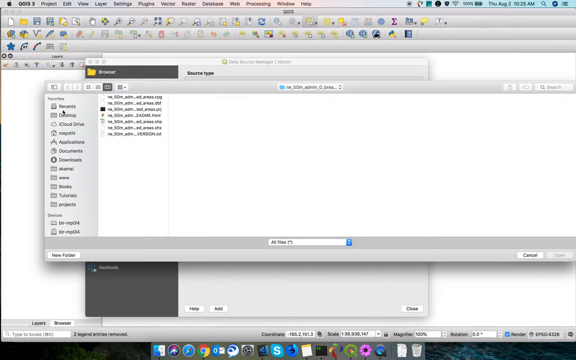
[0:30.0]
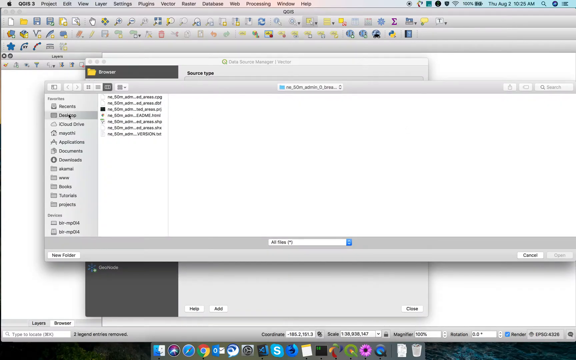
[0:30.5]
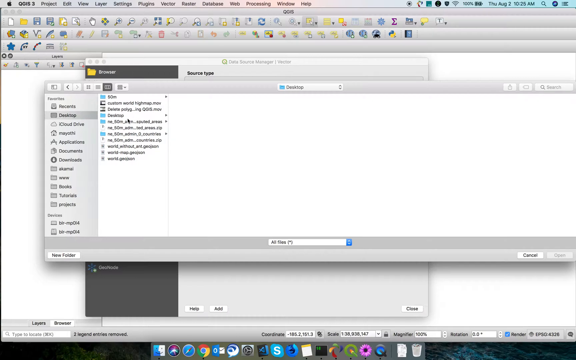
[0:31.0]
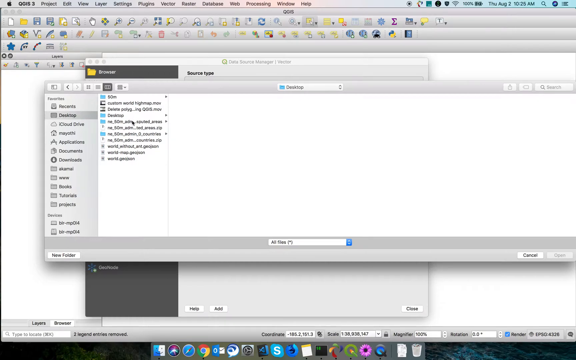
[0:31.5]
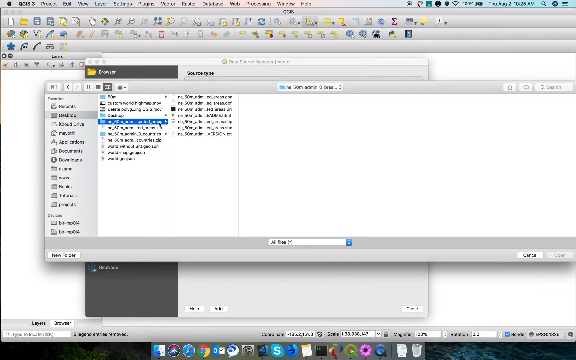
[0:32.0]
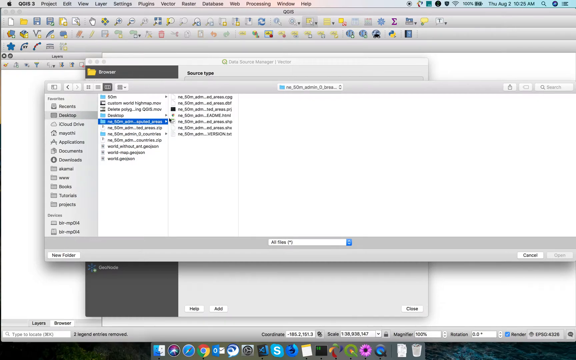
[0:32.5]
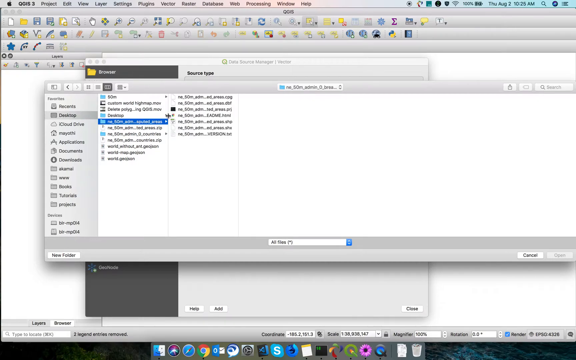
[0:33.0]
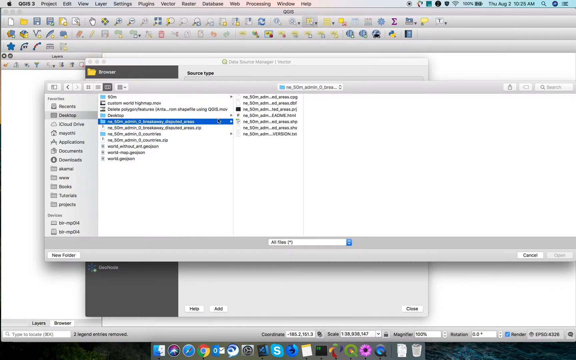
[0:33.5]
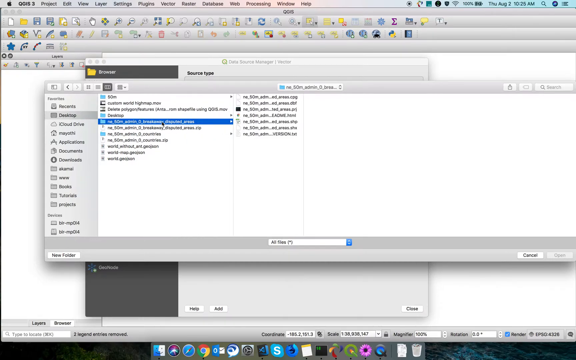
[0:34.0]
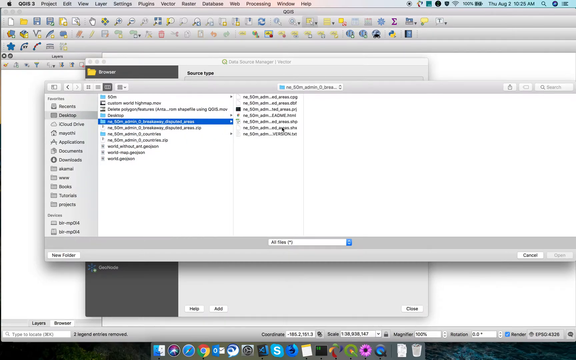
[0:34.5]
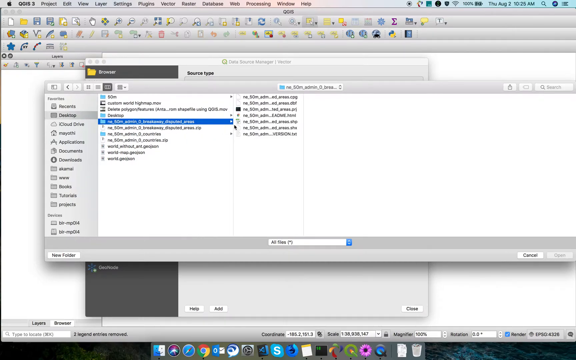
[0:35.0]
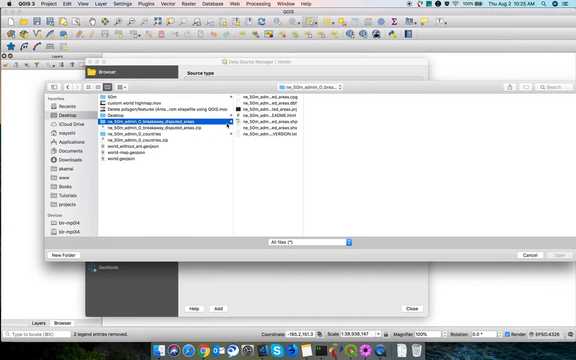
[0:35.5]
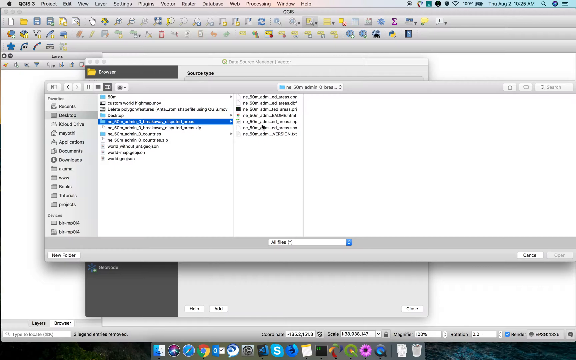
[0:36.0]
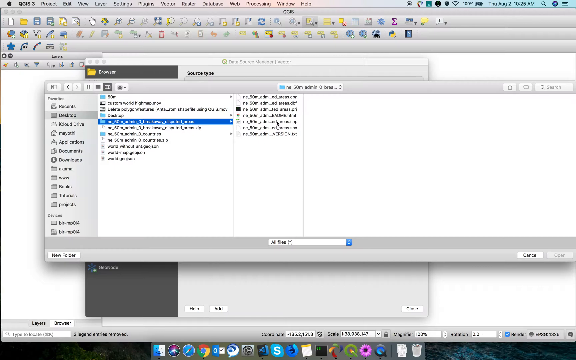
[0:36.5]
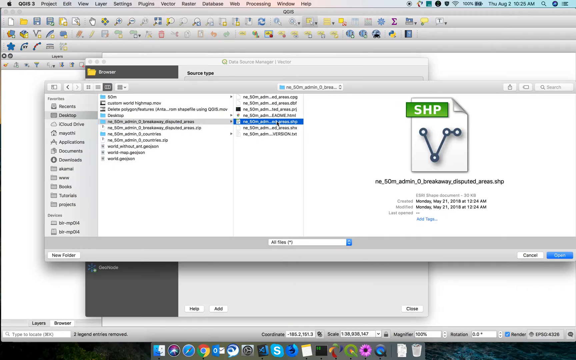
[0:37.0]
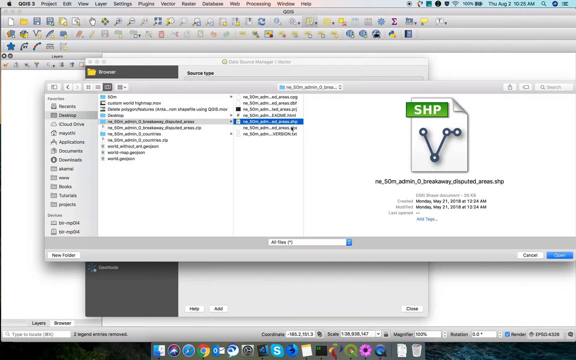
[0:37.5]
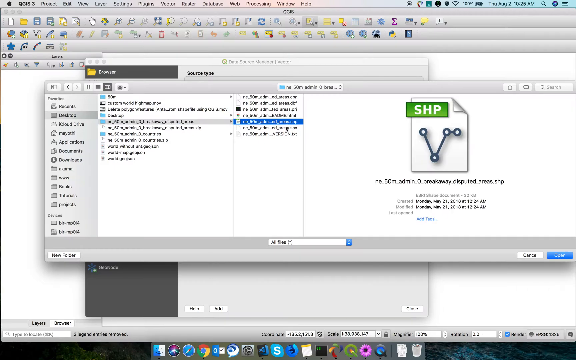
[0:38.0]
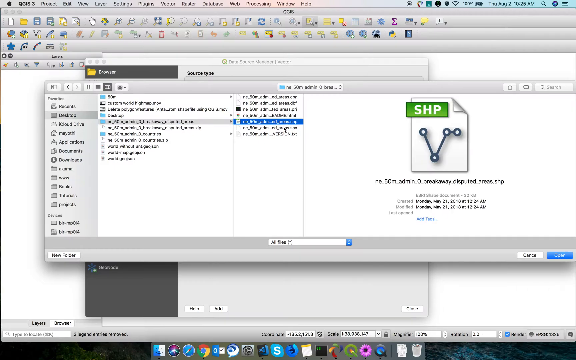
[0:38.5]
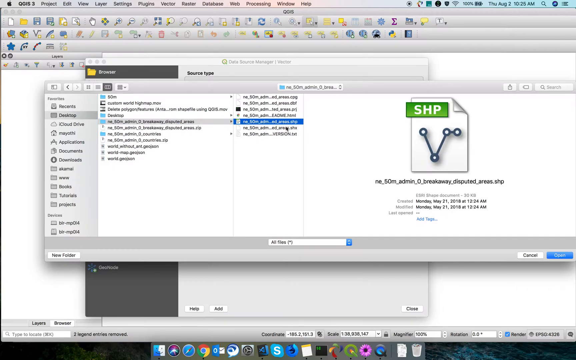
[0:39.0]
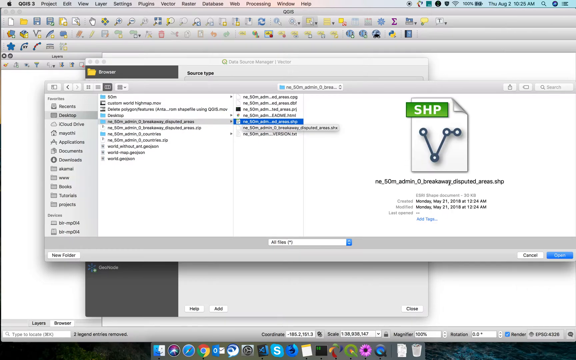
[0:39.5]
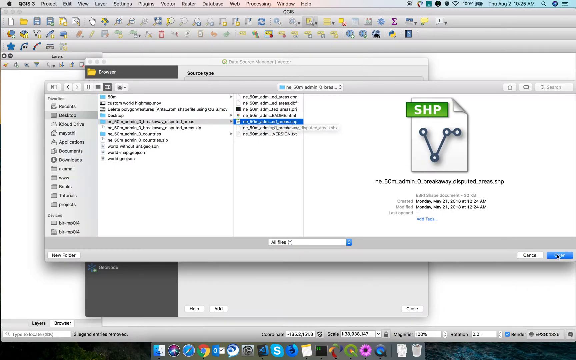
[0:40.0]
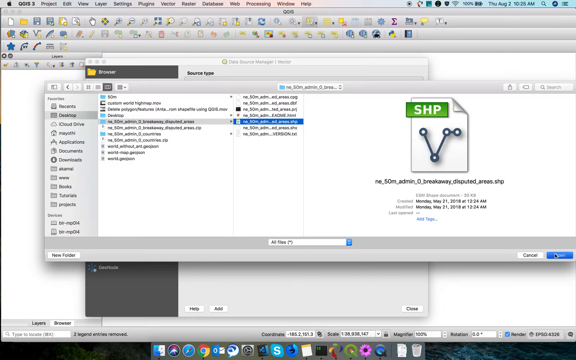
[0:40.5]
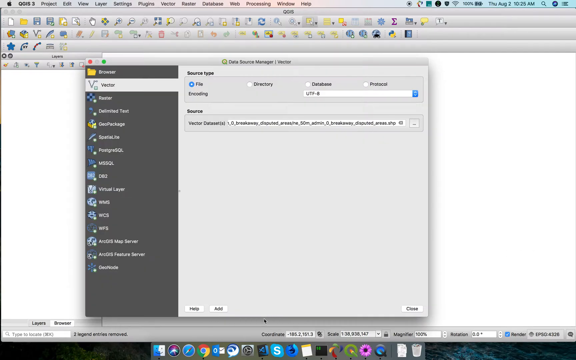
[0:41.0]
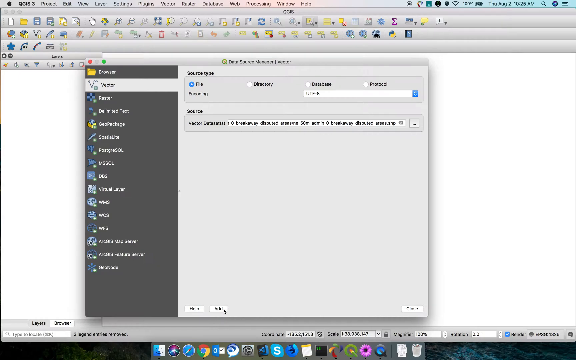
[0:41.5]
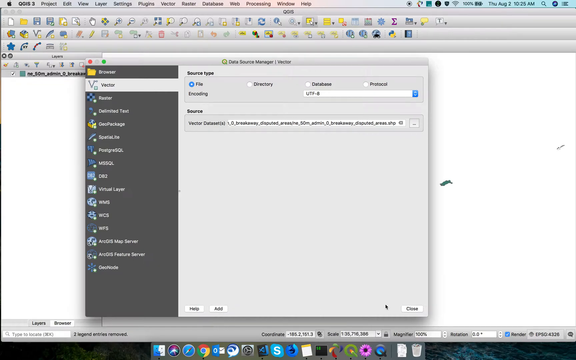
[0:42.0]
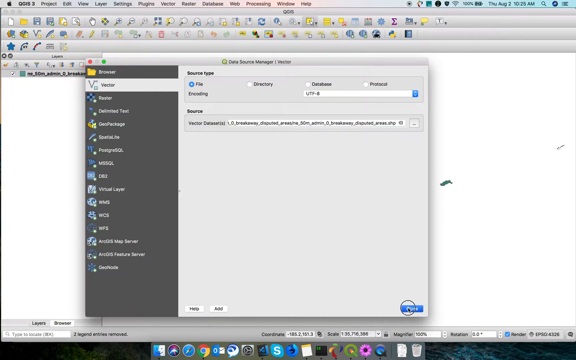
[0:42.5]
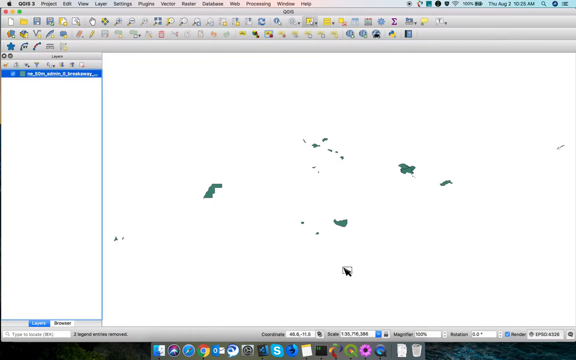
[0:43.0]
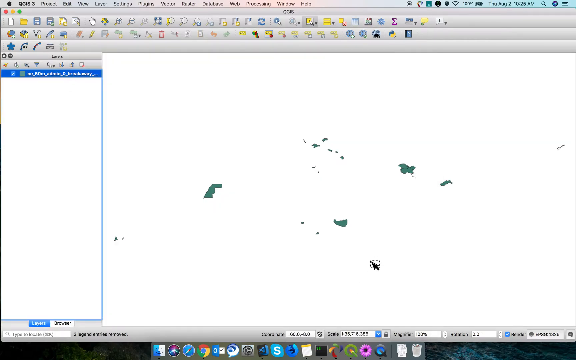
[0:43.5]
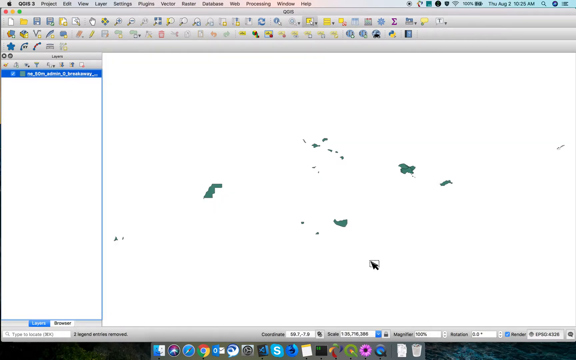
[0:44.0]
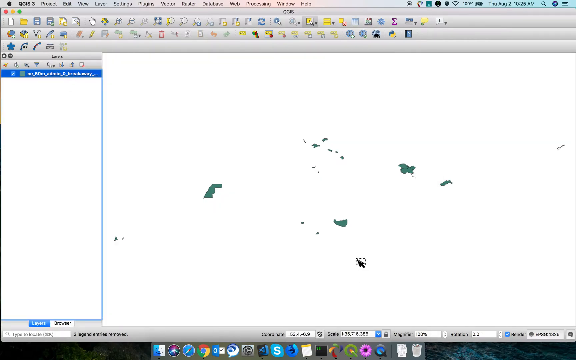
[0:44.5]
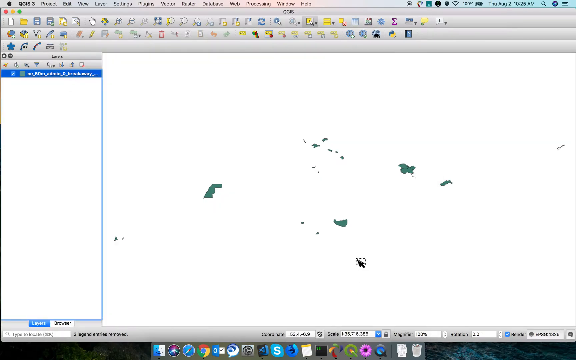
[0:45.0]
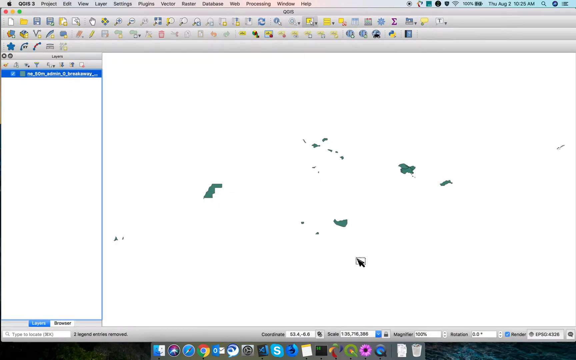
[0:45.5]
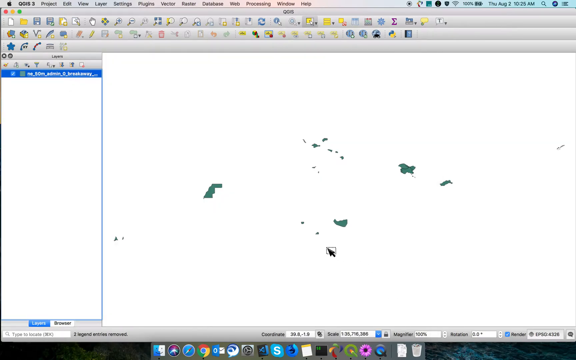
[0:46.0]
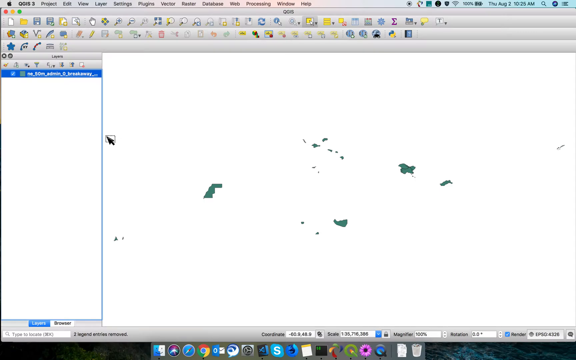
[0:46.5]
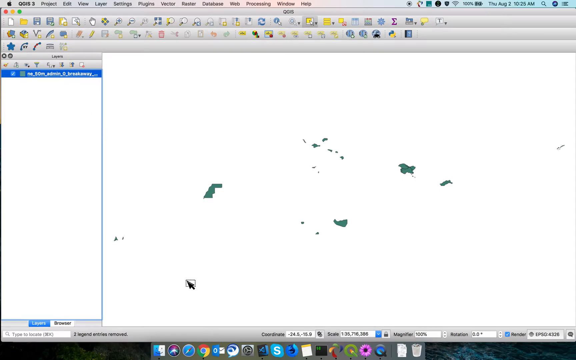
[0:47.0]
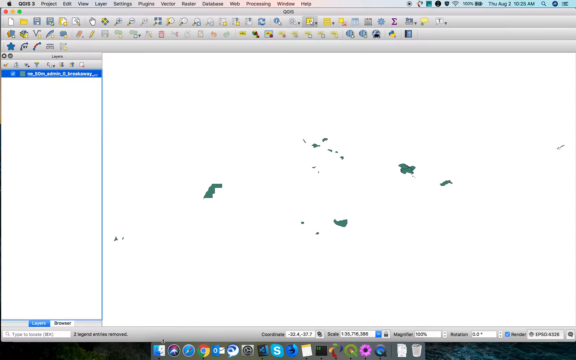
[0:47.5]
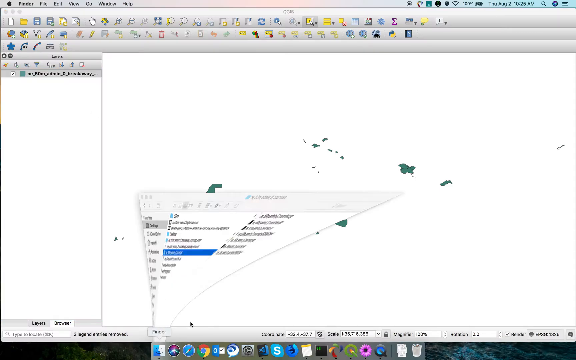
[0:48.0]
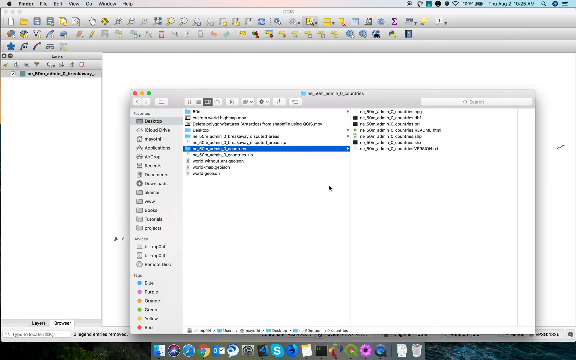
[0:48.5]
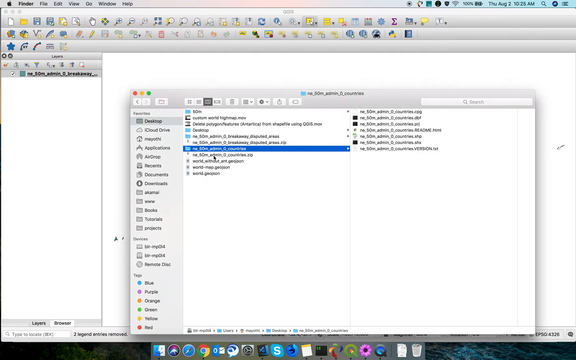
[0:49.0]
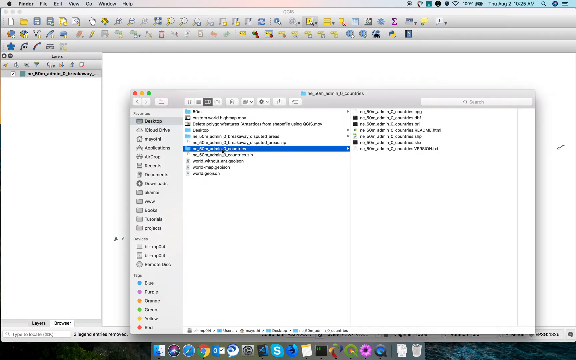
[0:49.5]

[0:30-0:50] The save page is shown in more detail, with save times, some of the file conventions, and the time each file was last edited or saved. The picture then moves to another screen showing some paint marks. More save locations are shown: Recents, Desktop, iCloud Drive, Applications, Documents and Downloads, along with subfolders and folders. The menu bar continues to show Project, Edit, View, Layer, Settings, Plugins, Vector, Router, Database, Web, Processing, Window and Help, along with the battery, internet connectivity, date and time, and other Apple computer functions. The same buttons in the first, second and third rows are shown, dozens of icons each featuring something different.